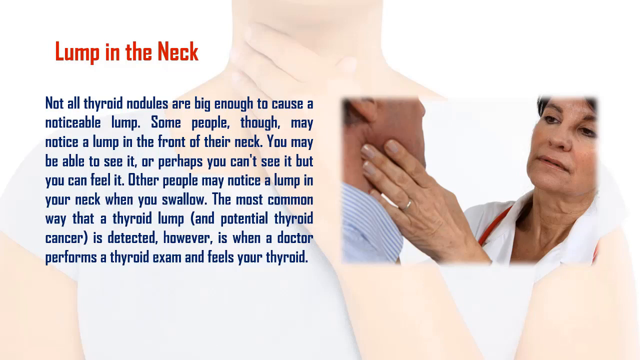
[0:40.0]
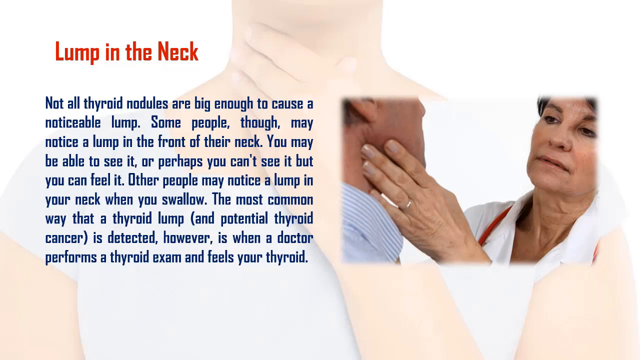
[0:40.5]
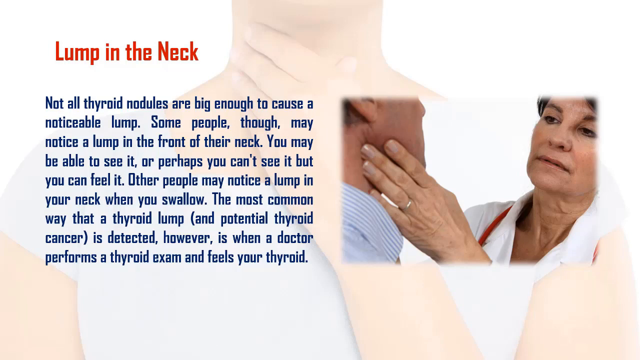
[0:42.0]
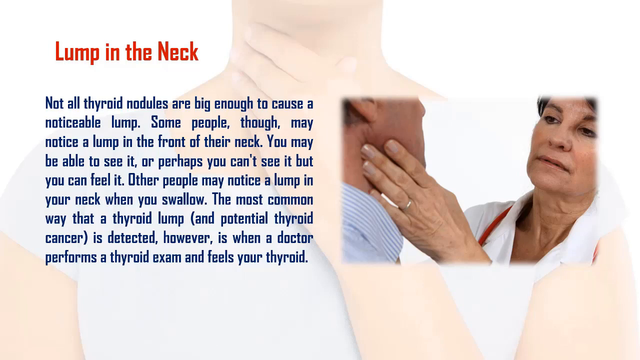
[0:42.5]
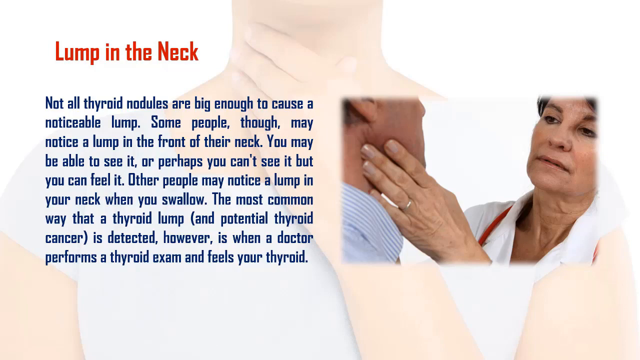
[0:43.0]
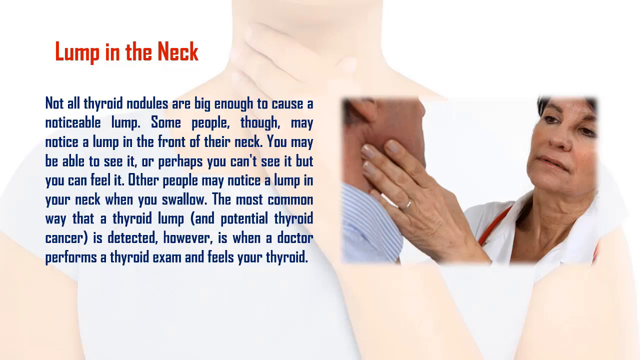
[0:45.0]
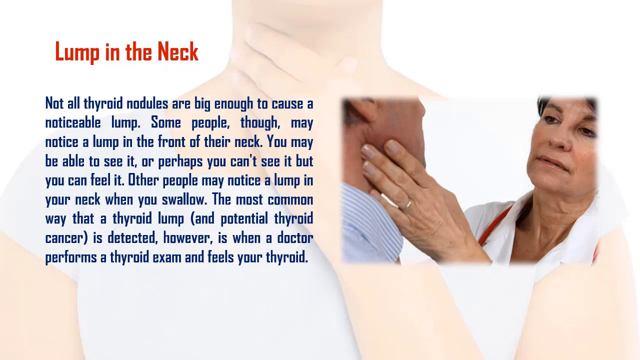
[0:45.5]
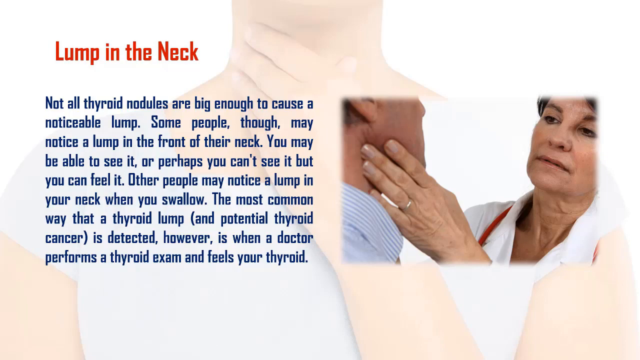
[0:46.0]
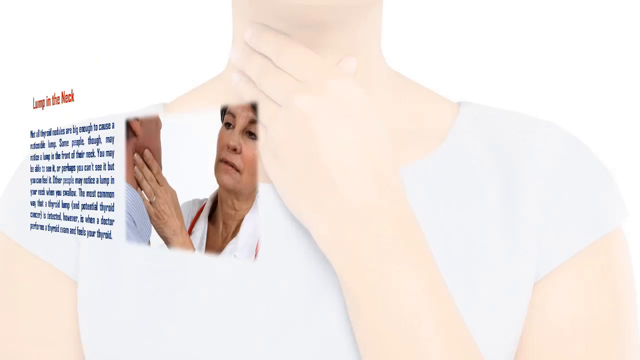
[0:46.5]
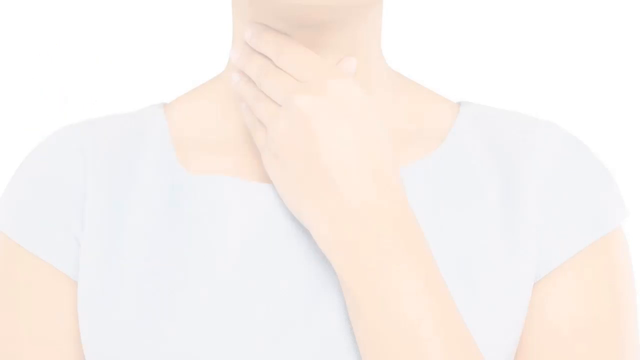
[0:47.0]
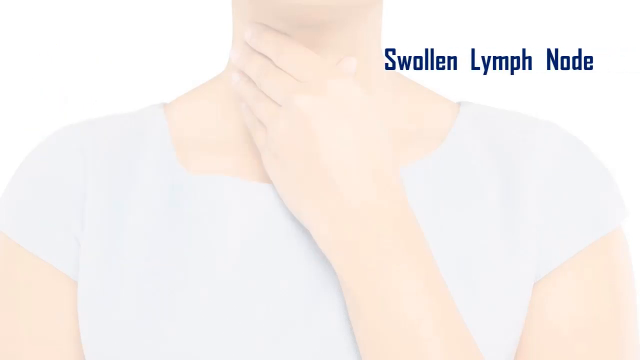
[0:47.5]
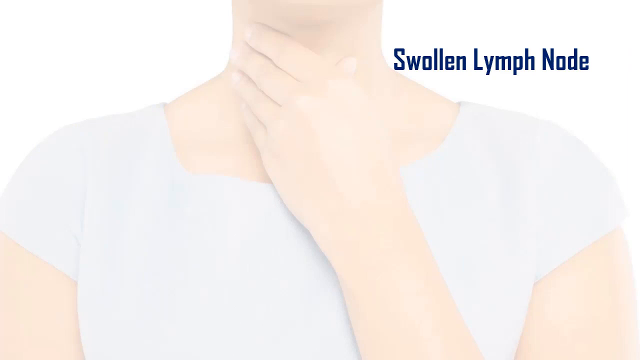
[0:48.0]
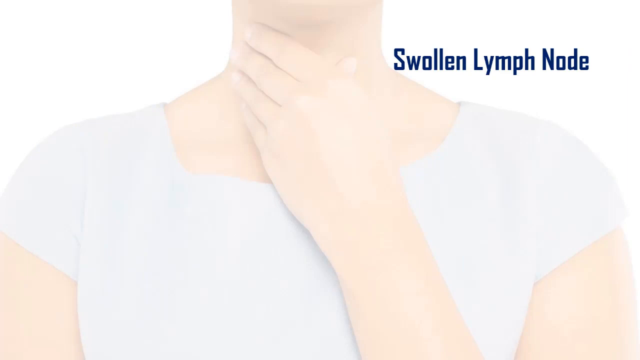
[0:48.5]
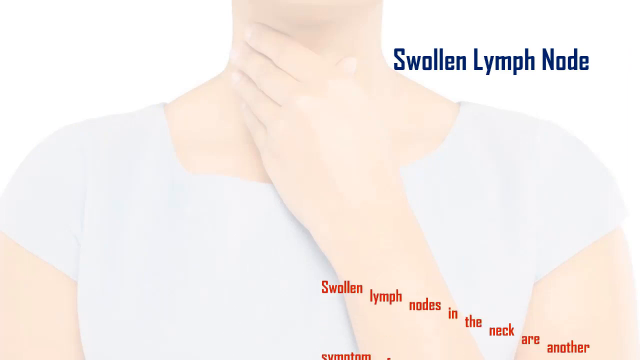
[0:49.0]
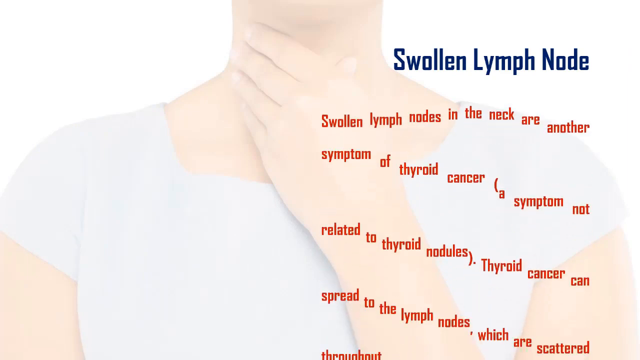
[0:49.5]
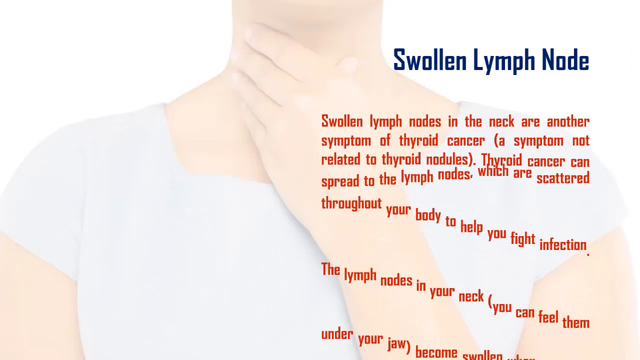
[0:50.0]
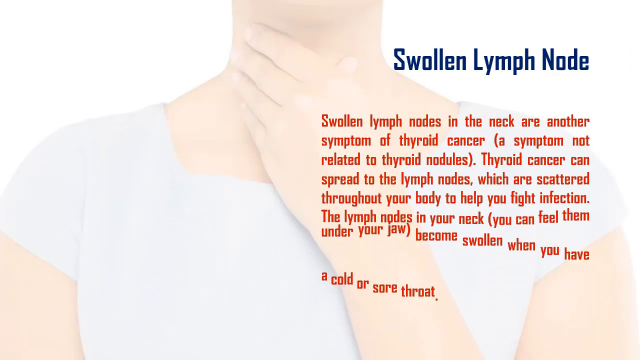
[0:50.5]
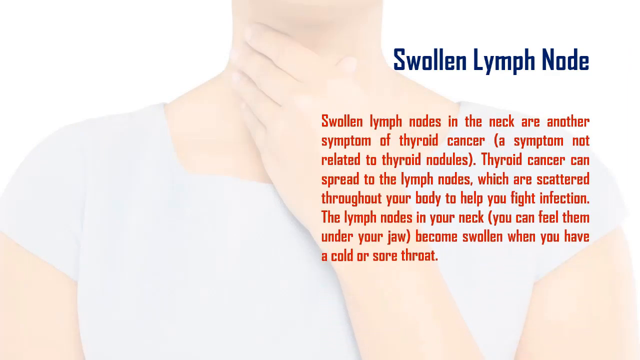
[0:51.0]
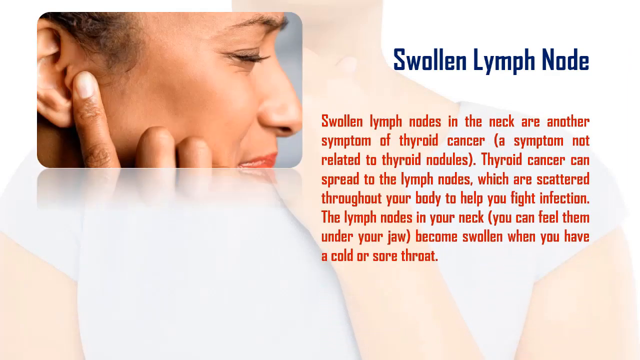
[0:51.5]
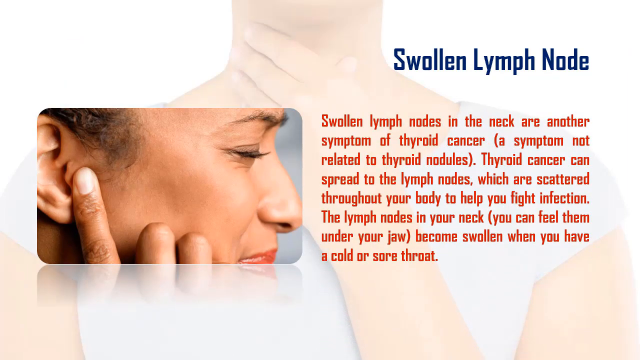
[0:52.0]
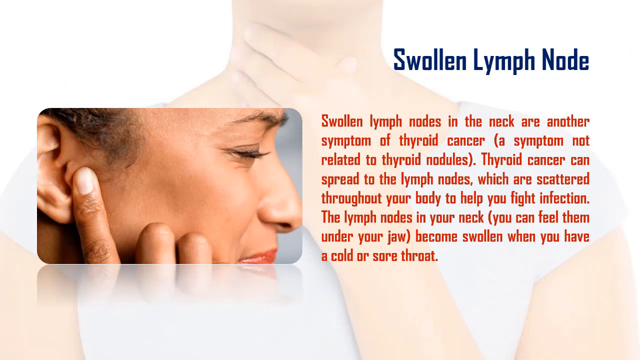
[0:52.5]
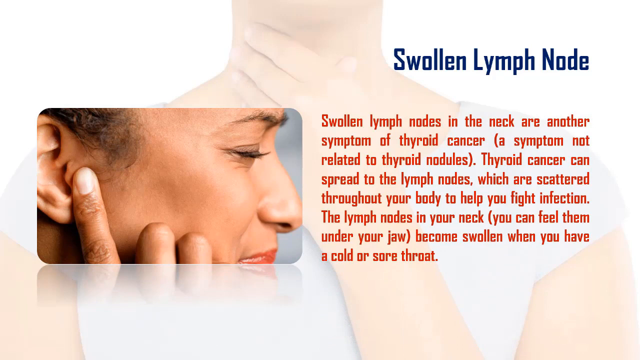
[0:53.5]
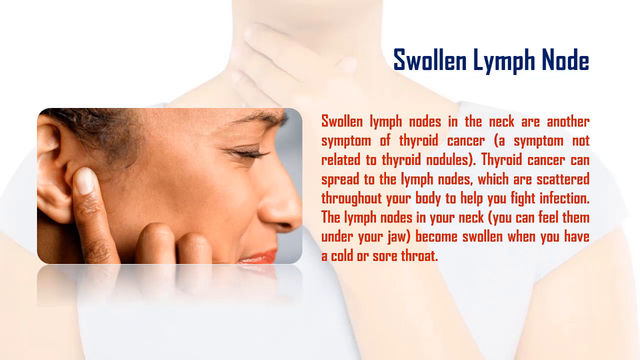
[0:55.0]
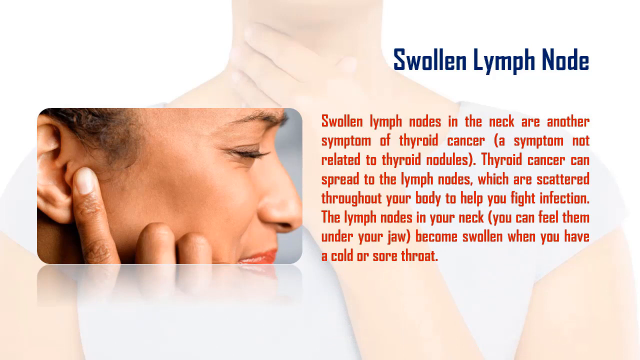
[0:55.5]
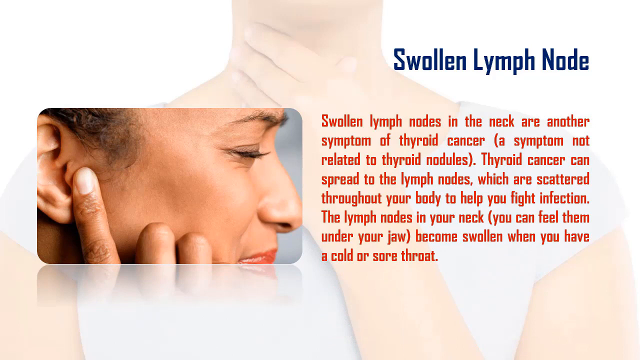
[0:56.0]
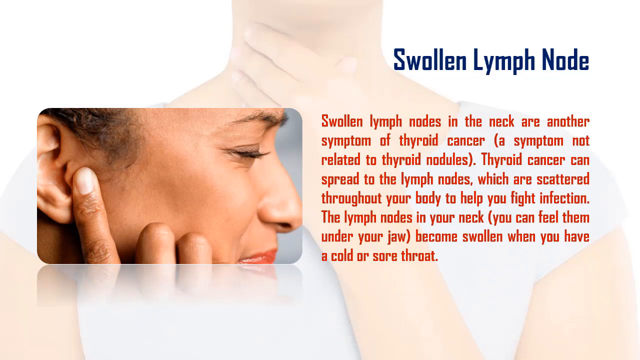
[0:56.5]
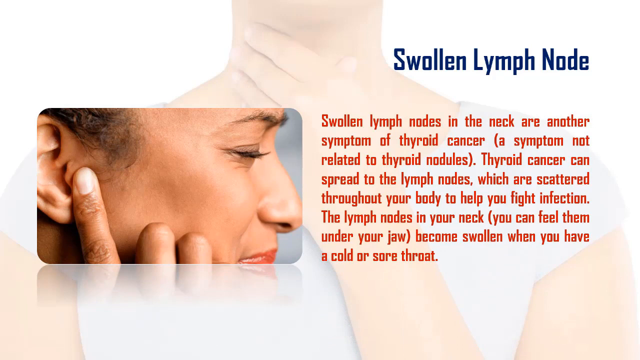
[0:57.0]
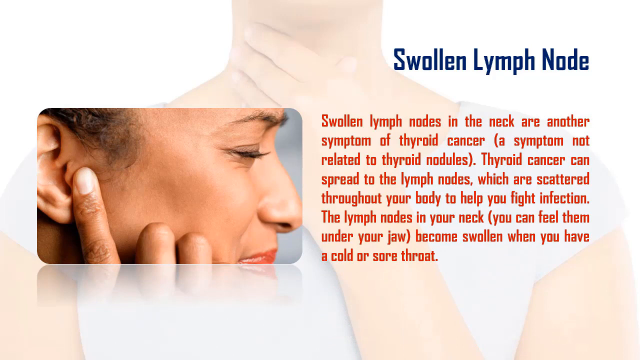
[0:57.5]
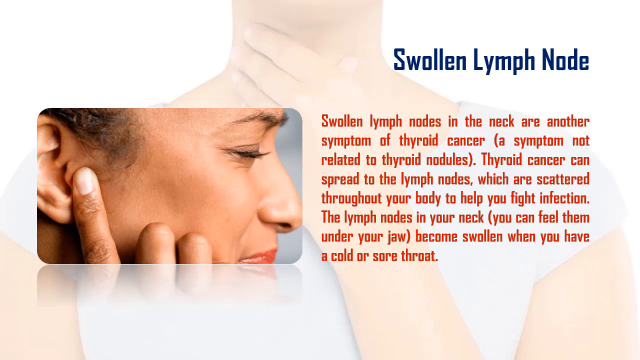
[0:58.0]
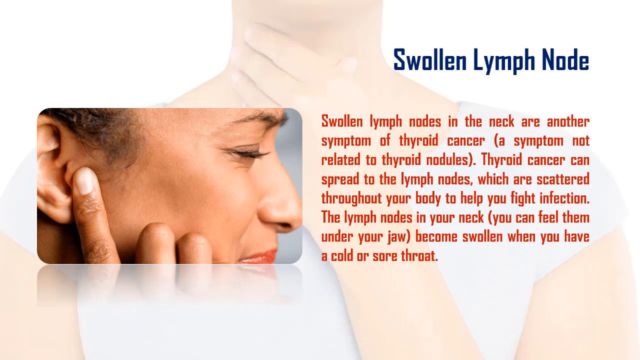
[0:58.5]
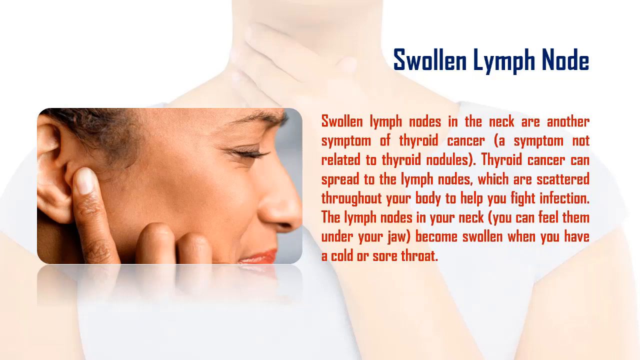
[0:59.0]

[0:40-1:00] The medical video, called Disease Facts, is about thyroid cancer. This slide says "lump in the neck" in red font, followed in blue font by: "Not all thyroid nodules are big enough to cause a noticeable lump. Some people, though, may notice a lump in the front of their neck. You may be able to see it, or perhaps you can't see it, but you can feel it. Other people may notice a lump in your neck when you swallow. The most common way that a thyroid lump and potential cancer is detected, however, is when a doctor performs a thyroid exam and feels your thyroid." The next slide reads "Swollen lymph node" in blue font, with red text to the right and a picture to the left. The picture shows a fairly light-skinned African-American woman with her hand up to her face: her index finger is right around her temple, just in front of her ear, and her other fingers are bent along the side of her cheek. The red text reads: "Swollen lymph nodes in the neck are another symptom of thyroid cancer (a symptom not related to thyroid nodules). Thyroid cancer can spread to the lymph nodes, which are scattered throughout your body to help you fight infection. The lymph nodes in your neck, you can feel them under your jaw, become swollen when you have a cold or a sore throat."